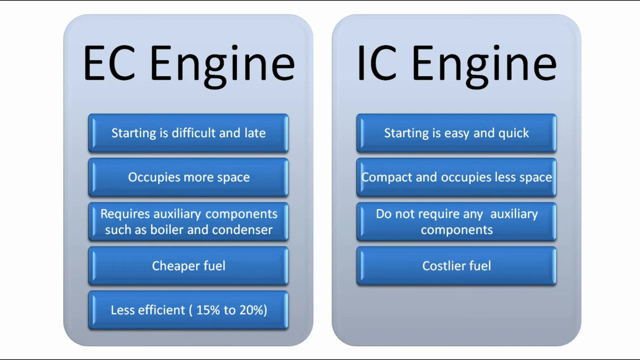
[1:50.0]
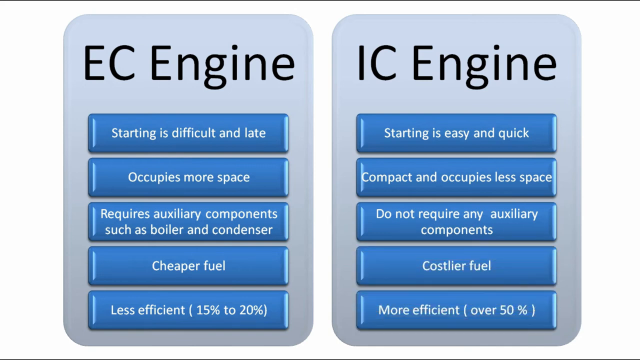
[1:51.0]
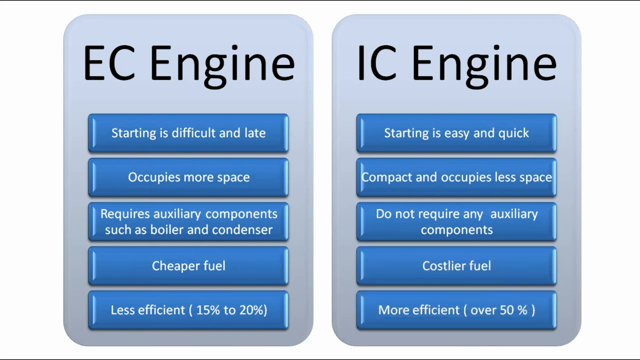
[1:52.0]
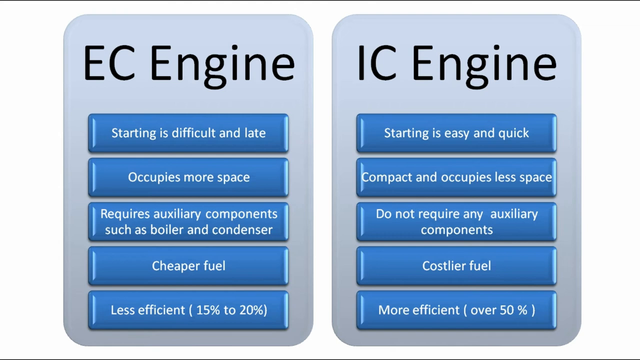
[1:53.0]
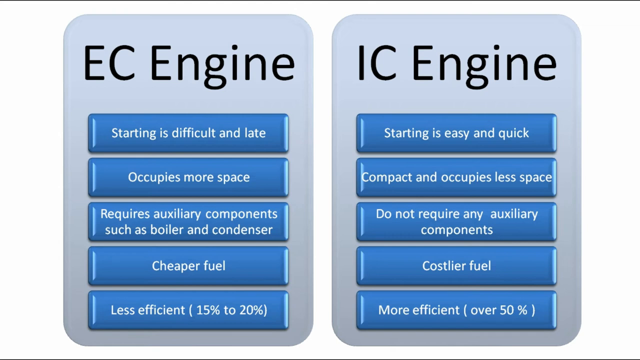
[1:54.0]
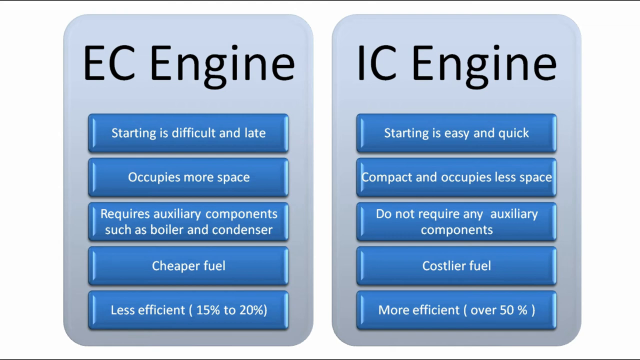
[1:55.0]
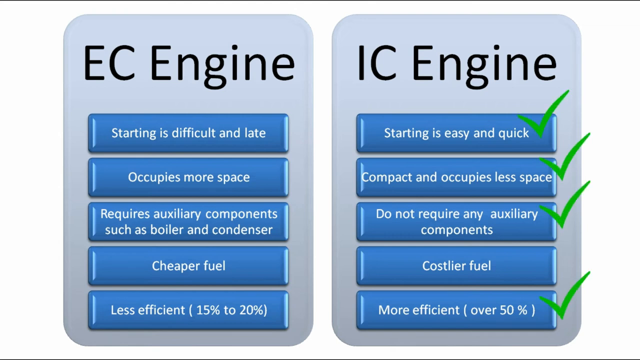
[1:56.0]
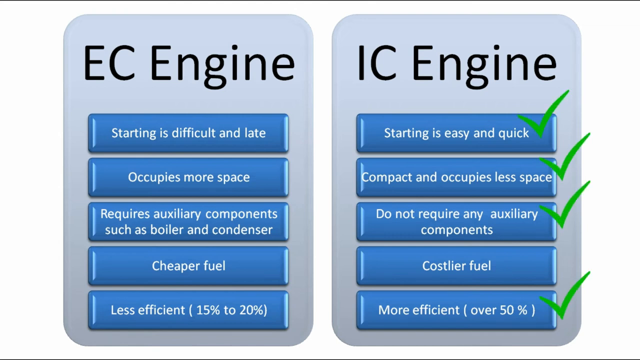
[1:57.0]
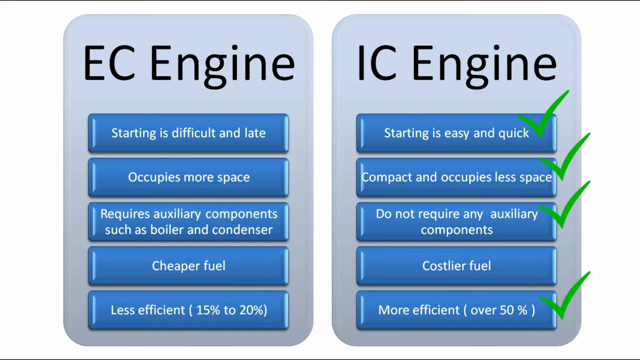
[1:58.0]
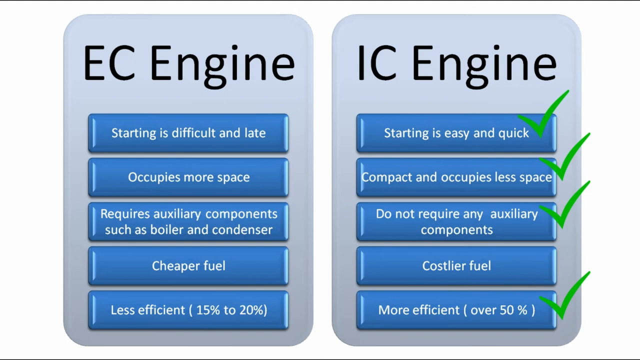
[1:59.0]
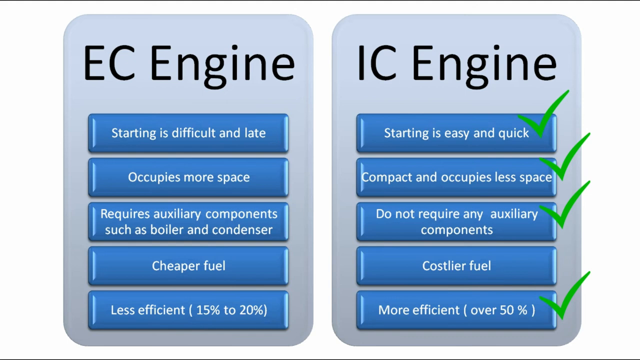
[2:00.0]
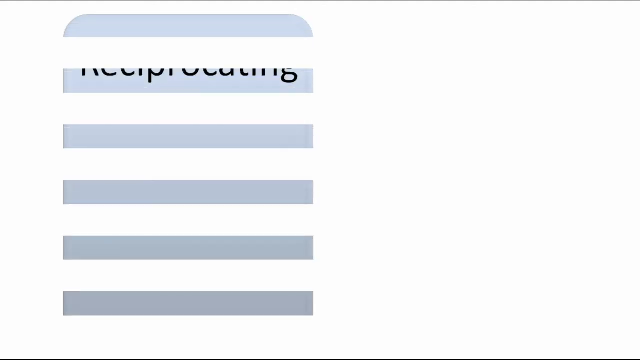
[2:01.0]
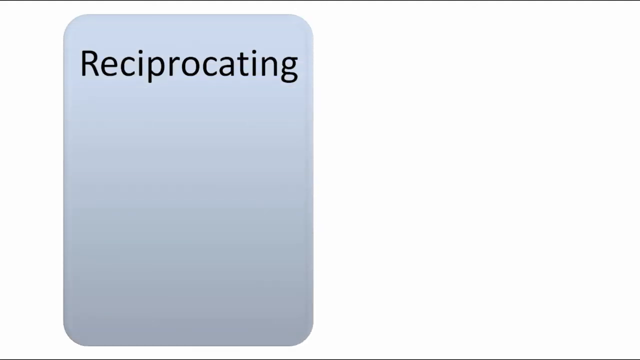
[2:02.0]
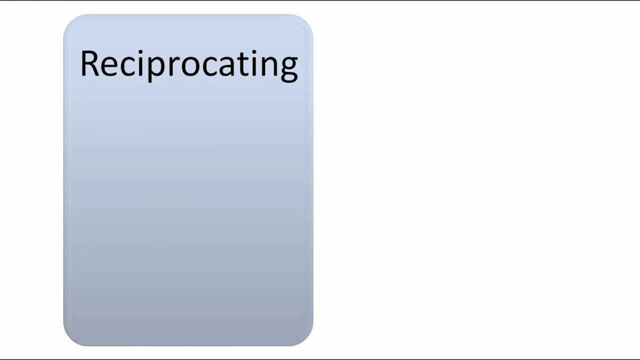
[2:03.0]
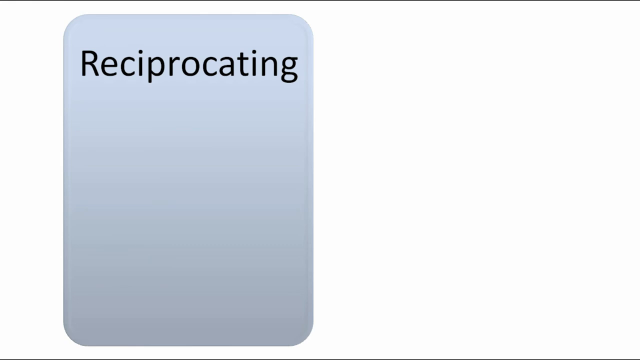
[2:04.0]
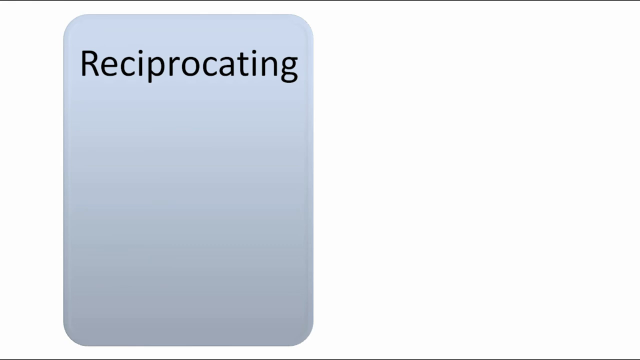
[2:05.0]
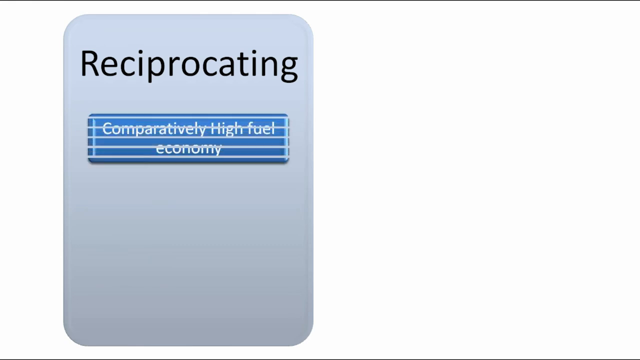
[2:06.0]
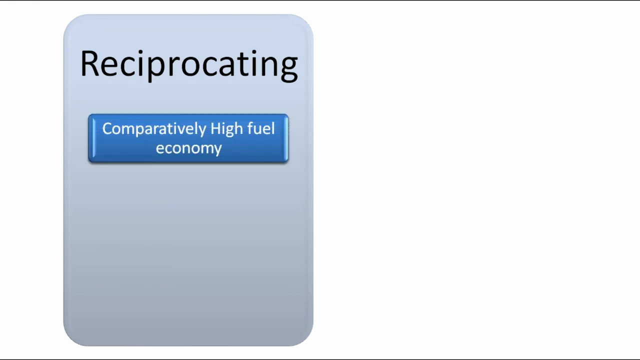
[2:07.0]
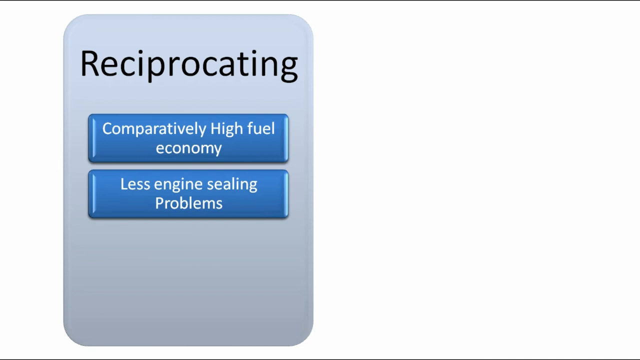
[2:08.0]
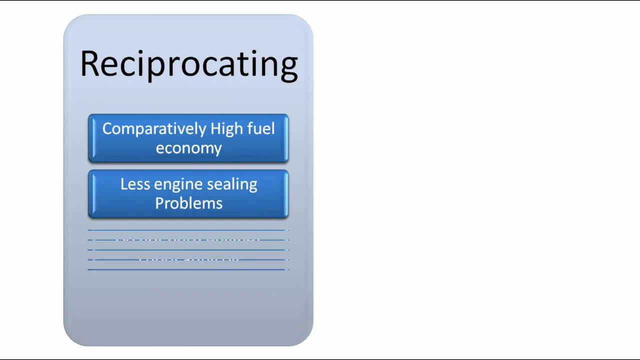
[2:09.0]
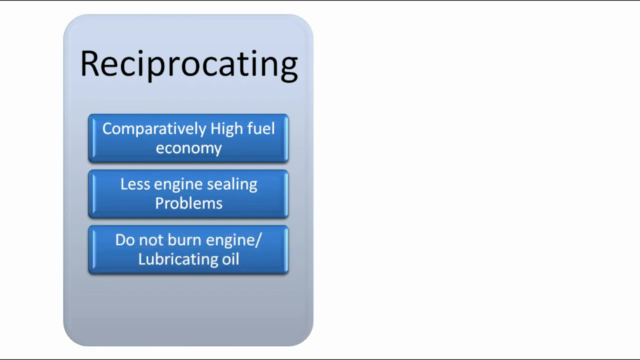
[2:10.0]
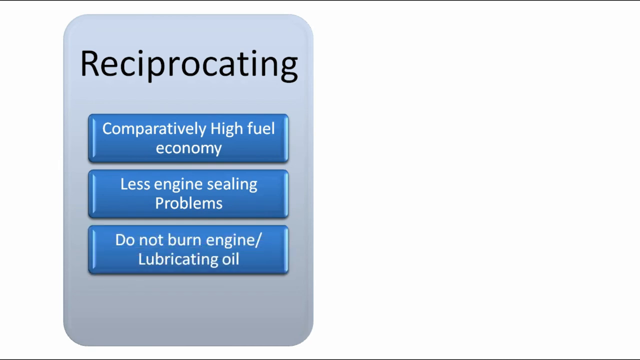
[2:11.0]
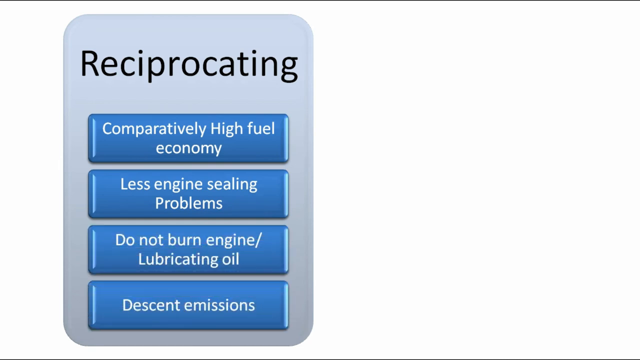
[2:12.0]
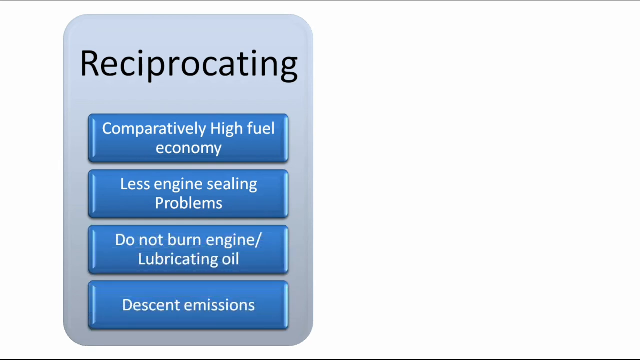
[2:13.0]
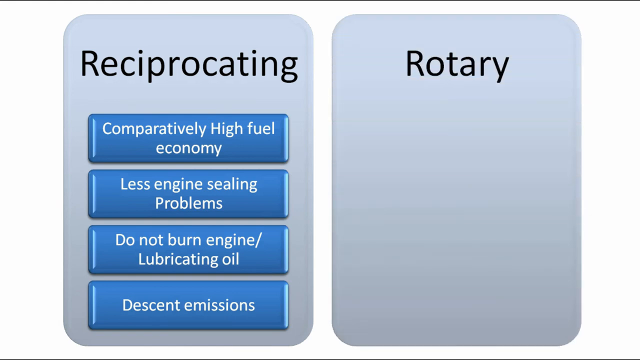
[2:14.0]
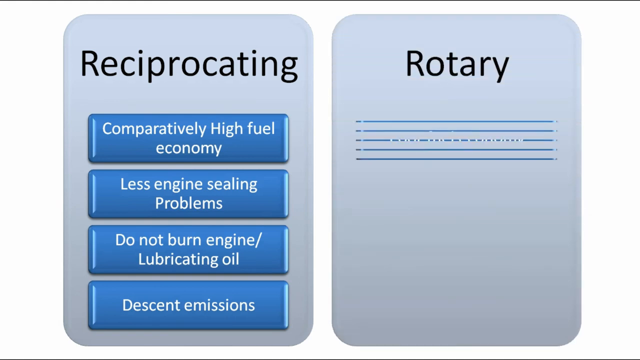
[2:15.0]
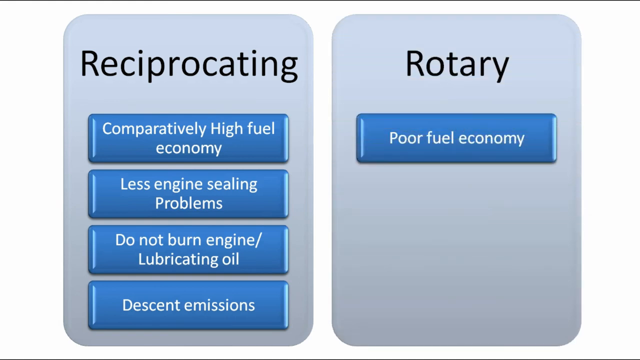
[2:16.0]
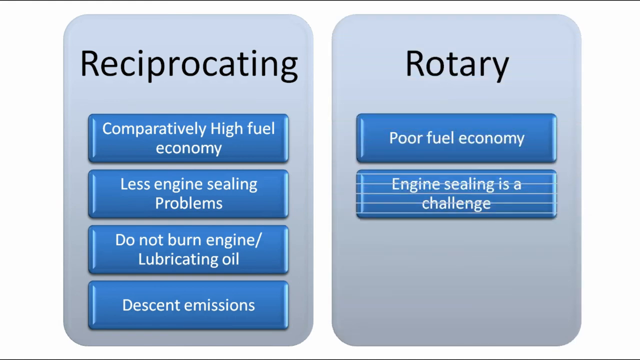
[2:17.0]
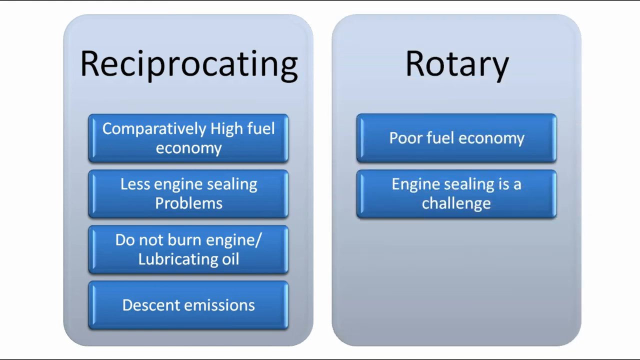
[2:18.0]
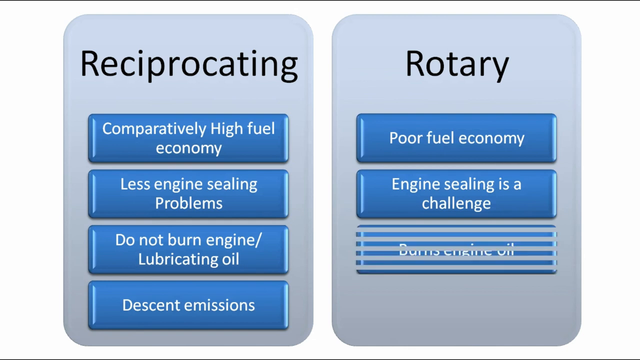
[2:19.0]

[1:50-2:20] The video appears to be a PowerPoint presentation. On the left is a light blue rectangle with black text reading "EC engine" at the top inside it, and below it are five blue rectangles with white text reading "starting is difficult and late," "occupies more space," "requires auxiliary components such as boiler and condenser," "cheaper fuel," "less efficient, 15 to 20 percent." On the right is another light blue rectangle with black text at the top reading "IC engine," and four blue rectangles with white text reading "starting is easy and quick," "compact and occupies less space," "do not require any auxiliary components," "costlier fuel." A fifth rectangle appears reading "more efficient, over 50 percent." Four blue-green check marks then appear to the right of the blue rectangles reading "starting is easy and quick," "compact and occupies less space," "do not require any auxiliary components" and "more efficient, over 50 percent." The video then transitions to the next slide, where a light blue rectangle appears in segments, sliding downward. At the top middle it reads "reciprocating" in black text inside the rectangle. Below it a blue rectangle with white text appears reading "comparatively high fuel economy," then another reading "less engine sealing problems," another reading "do not burn engine lubricating oil," and a fourth reading "decent emissions." On the right side another light blue rectangle appears with black text at the top reading "rotary." A blue rectangle appears below it with white text in the middle reading "poor fuel economy," then a second reading "engine sealing is a challenge," and a third reading "burns engine oil."